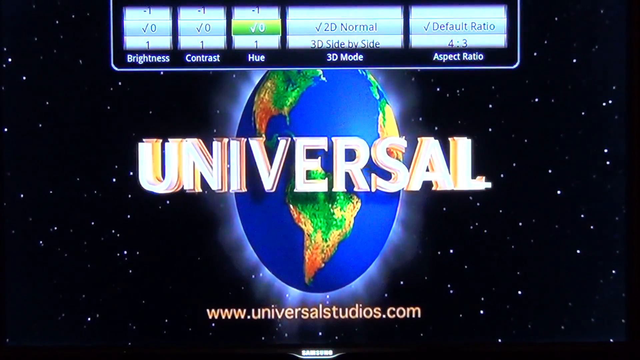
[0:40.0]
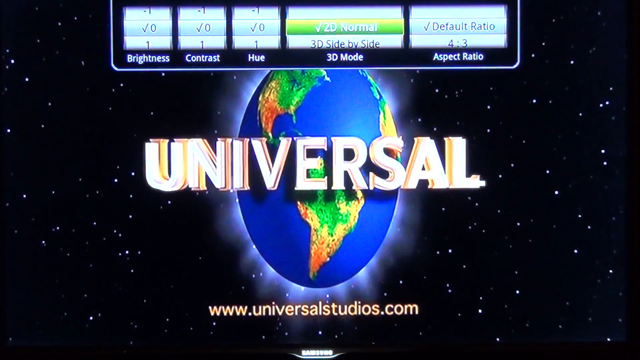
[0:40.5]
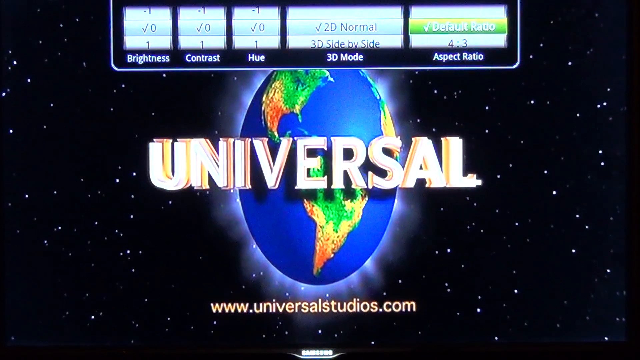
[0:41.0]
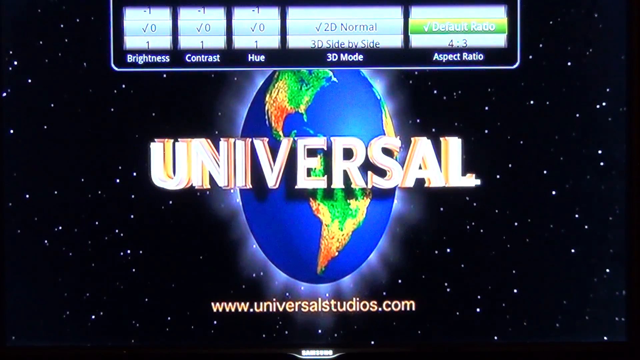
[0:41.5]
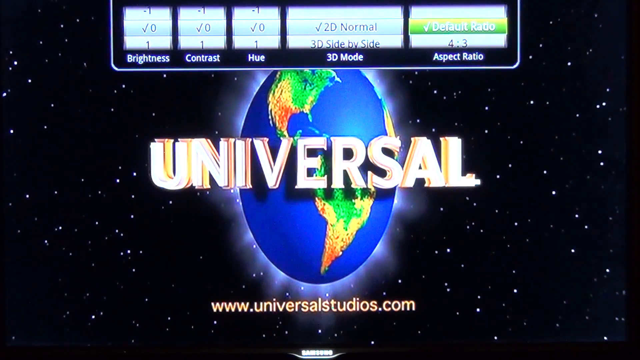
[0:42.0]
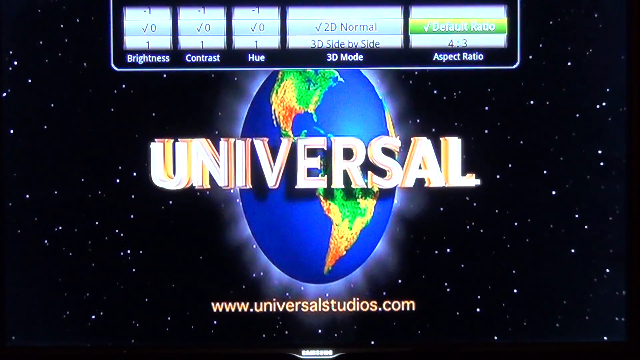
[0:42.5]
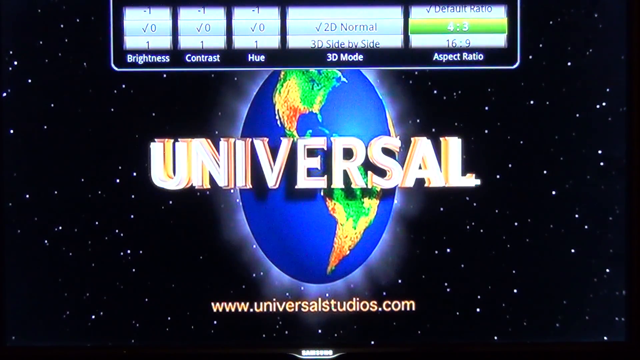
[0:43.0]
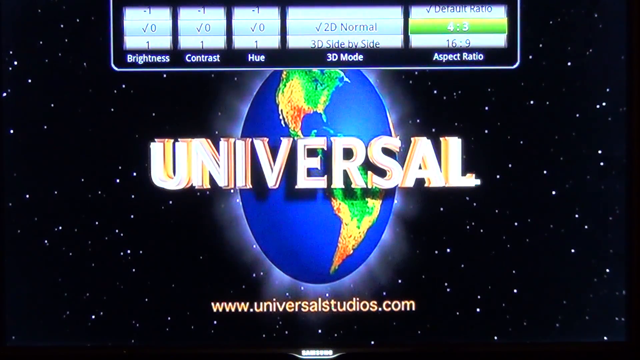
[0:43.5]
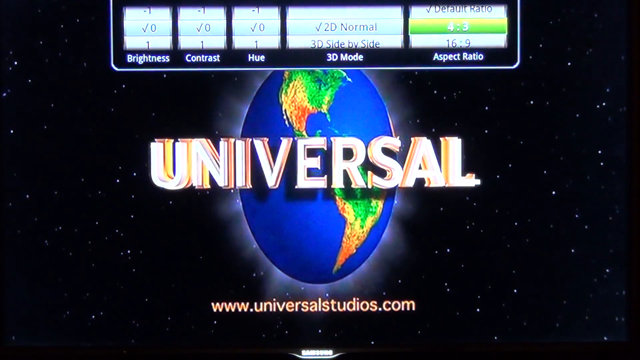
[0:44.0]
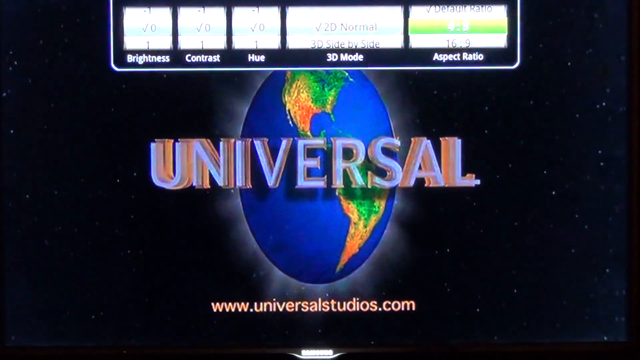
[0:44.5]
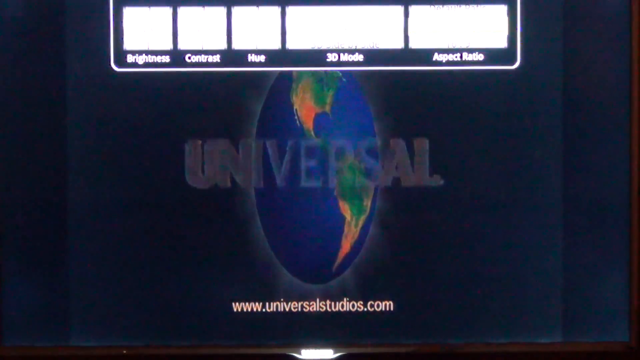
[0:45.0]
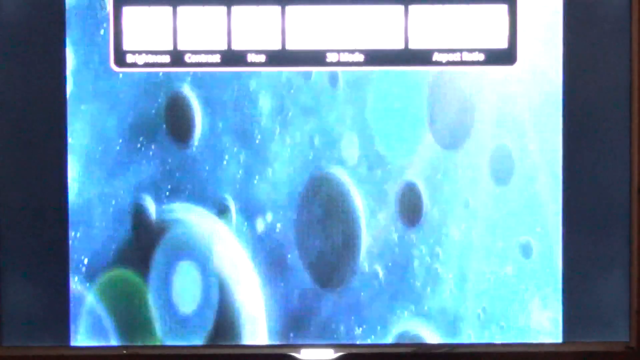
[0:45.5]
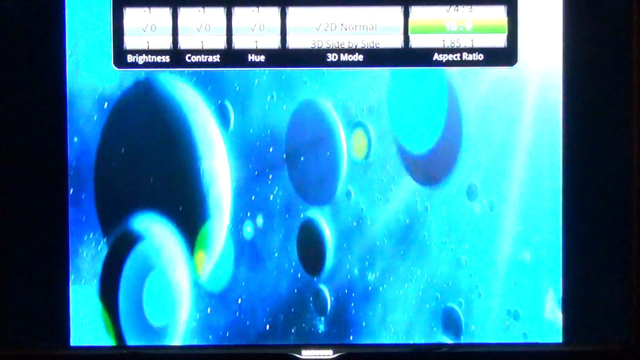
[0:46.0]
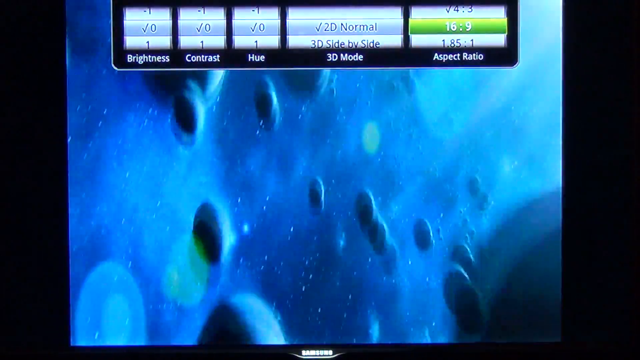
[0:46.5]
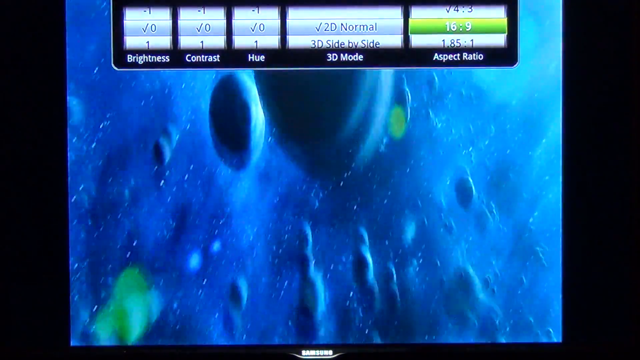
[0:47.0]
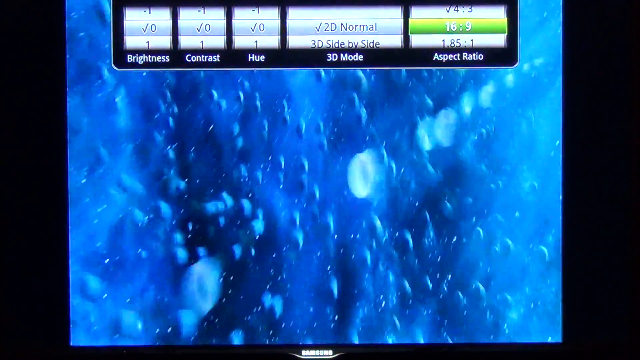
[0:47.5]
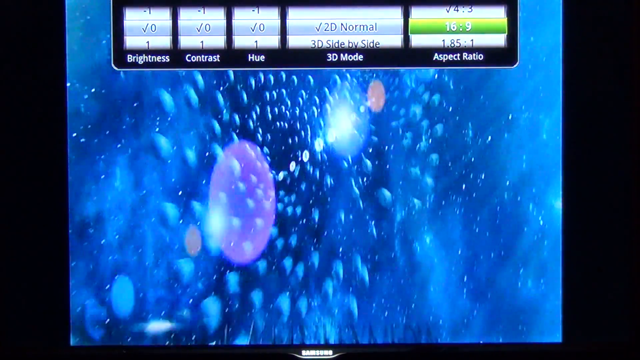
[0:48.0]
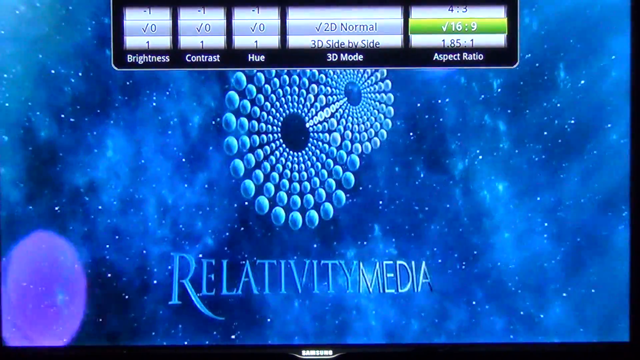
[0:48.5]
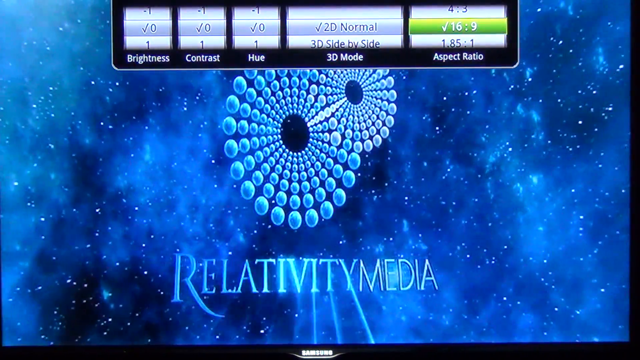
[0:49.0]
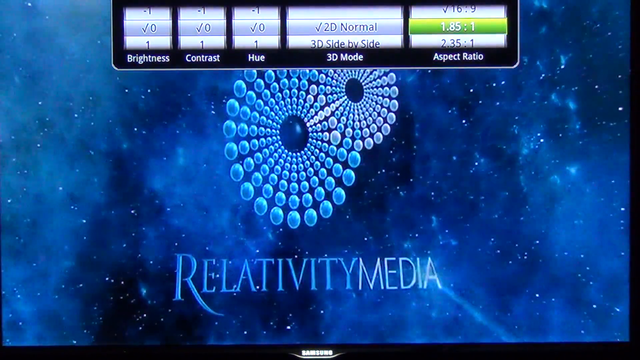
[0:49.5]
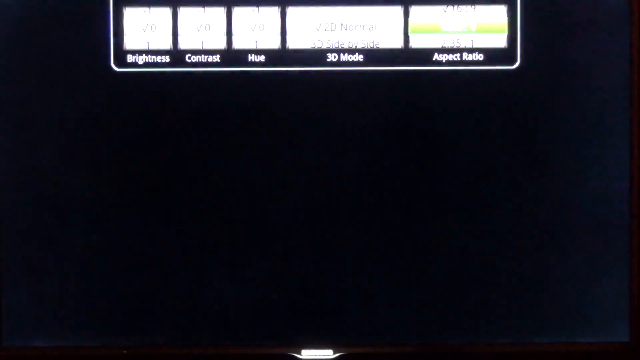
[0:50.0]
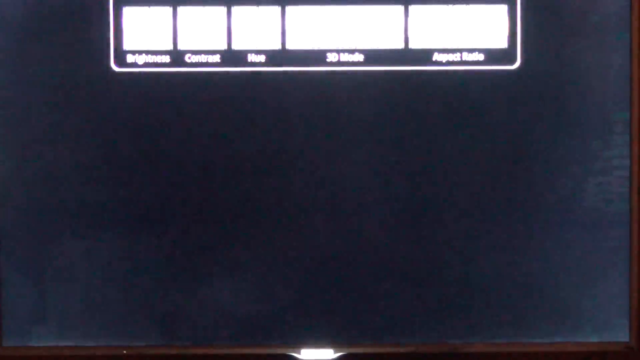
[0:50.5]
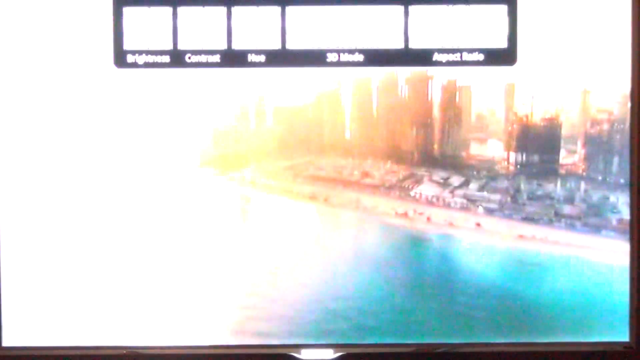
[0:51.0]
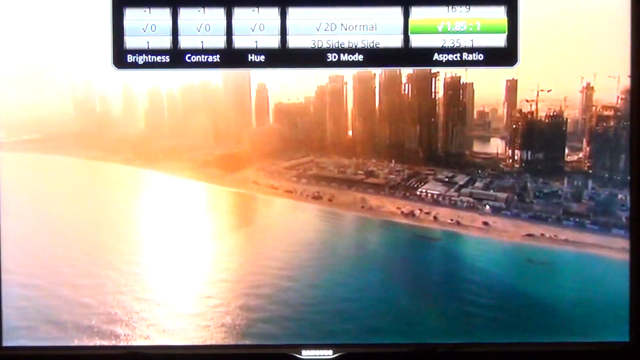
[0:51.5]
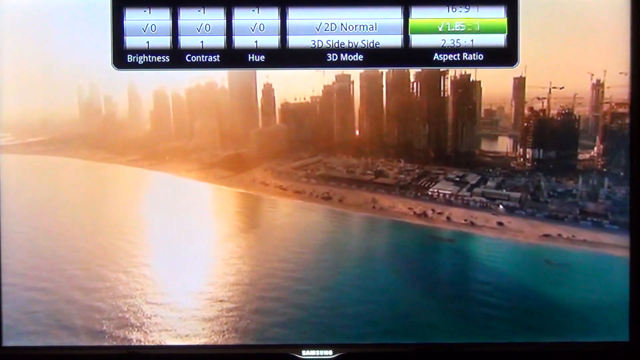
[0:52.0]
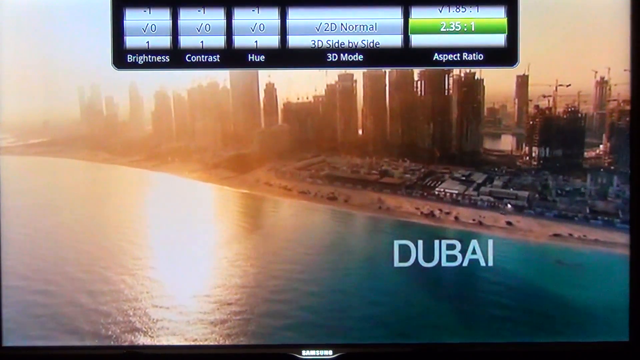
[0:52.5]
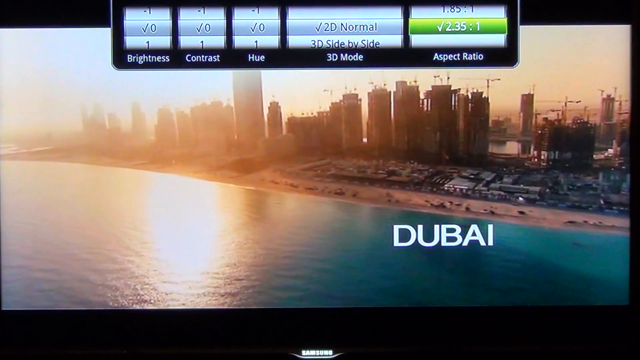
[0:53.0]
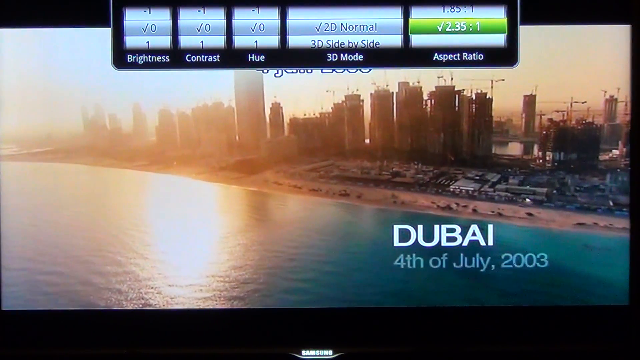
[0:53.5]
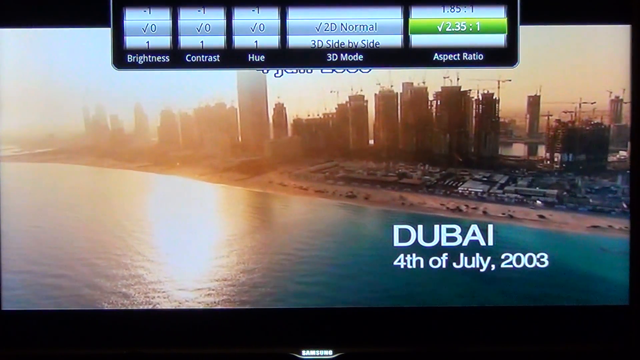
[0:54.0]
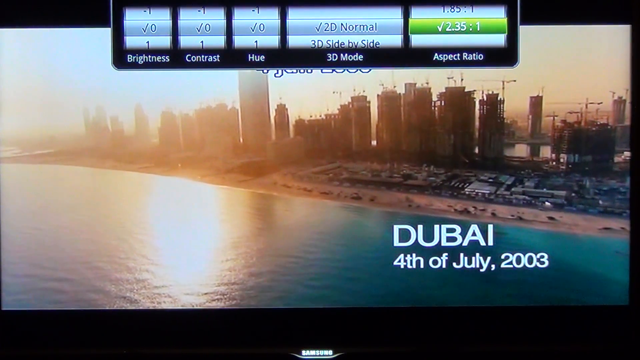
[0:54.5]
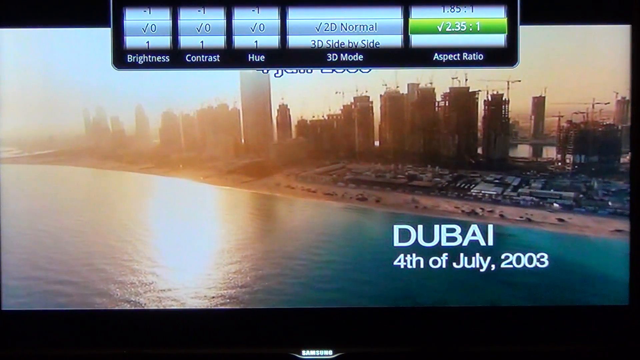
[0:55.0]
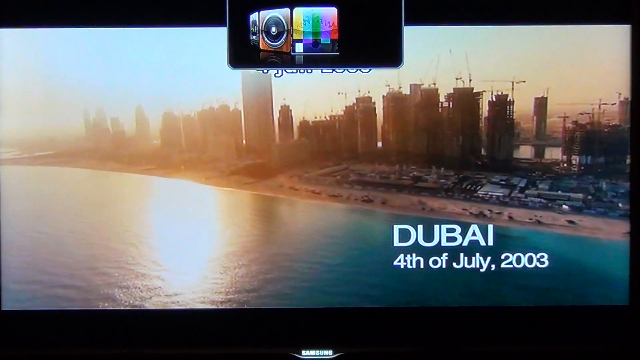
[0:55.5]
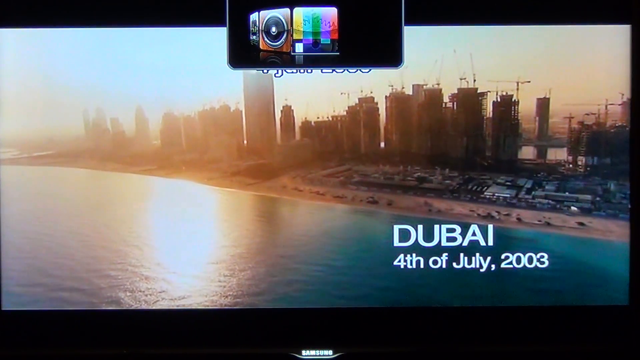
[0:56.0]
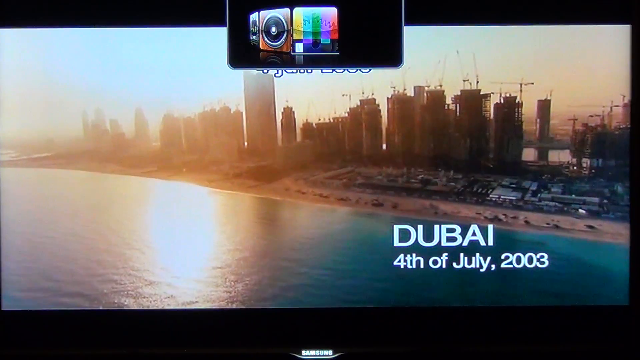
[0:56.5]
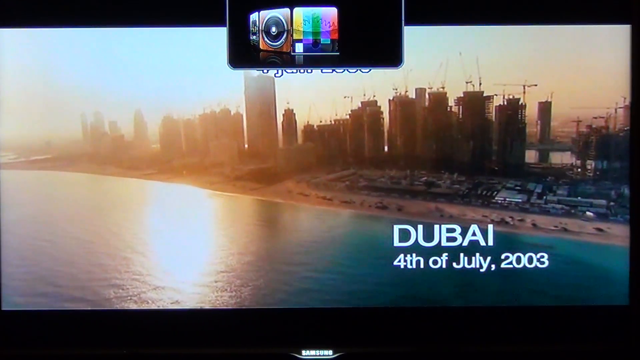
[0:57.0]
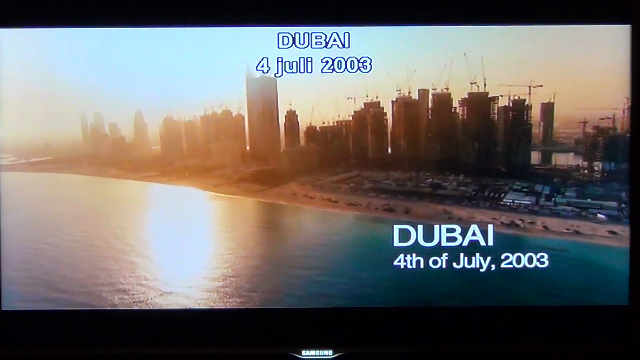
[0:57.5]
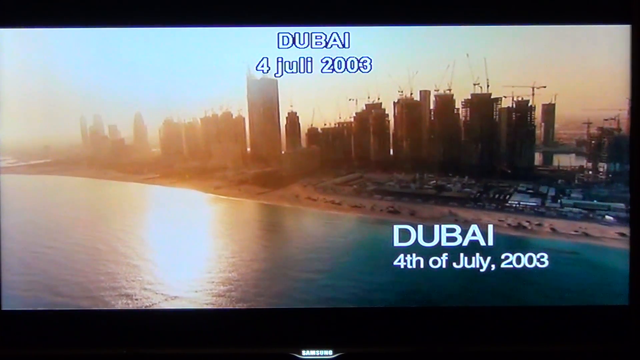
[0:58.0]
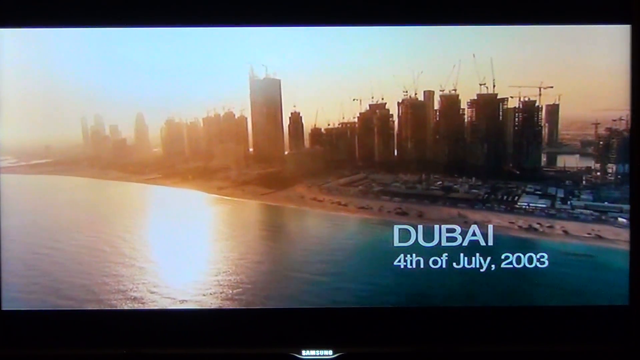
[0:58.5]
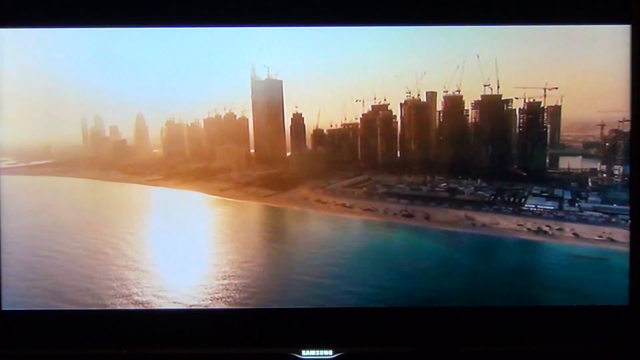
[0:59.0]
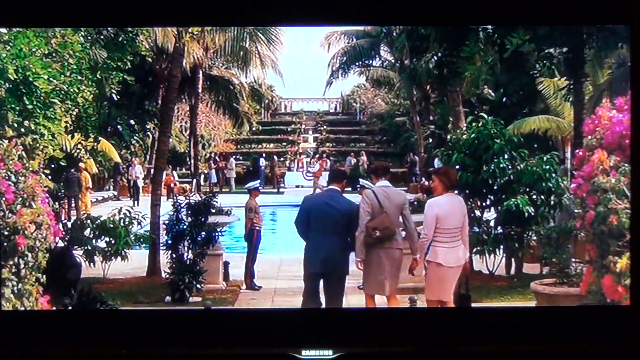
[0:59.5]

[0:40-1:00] The movie starts with the Universal Studios logo going round, followed by the Relativity Media logo, which is shown only briefly and seems to be an array of globes in space coming together to form a 2D image of circles. It changes very quickly to the actual film, which is set in Dubai, 4th of July 2003. The user is still going through the menus and changes the aspect ratio to 2.35 to 1, making it a bit more cinematic. A view of a hotel in Dubai appears, and it seems many buildings are being constructed in Dubai.